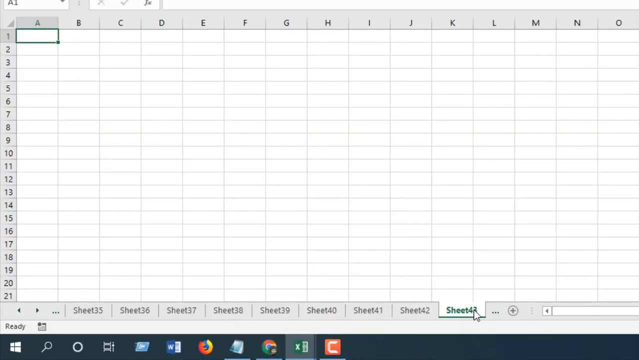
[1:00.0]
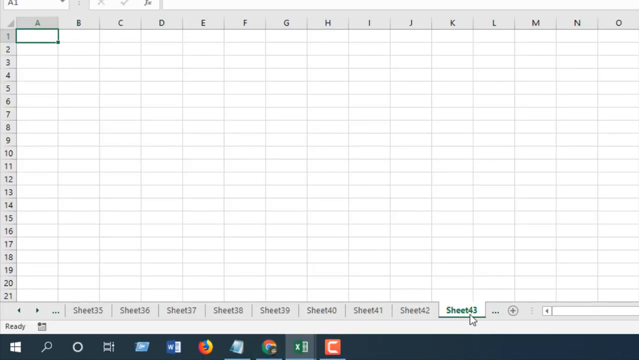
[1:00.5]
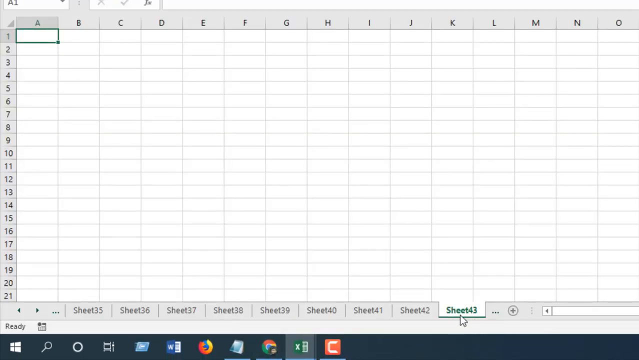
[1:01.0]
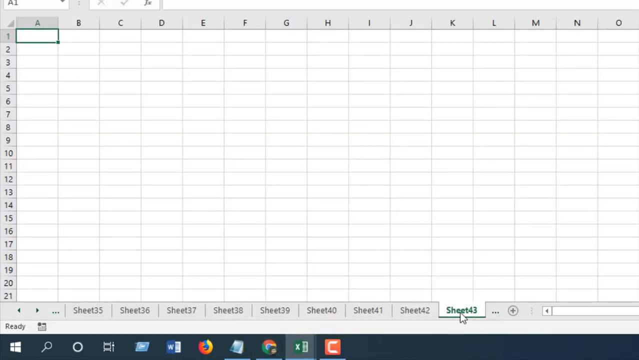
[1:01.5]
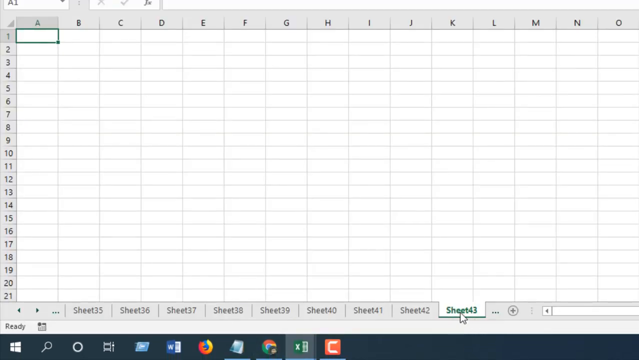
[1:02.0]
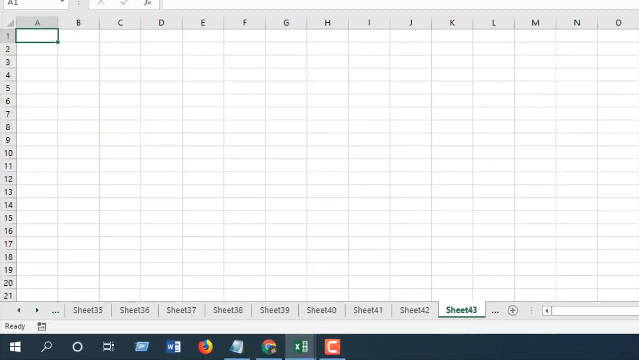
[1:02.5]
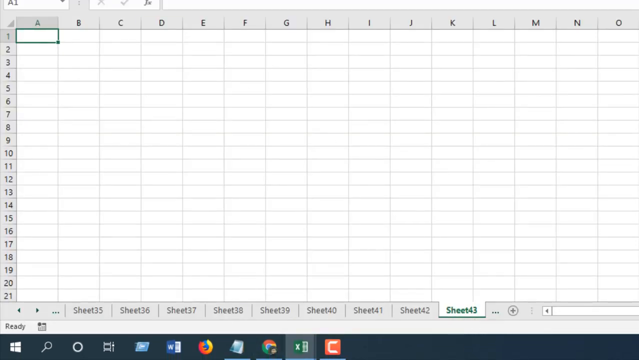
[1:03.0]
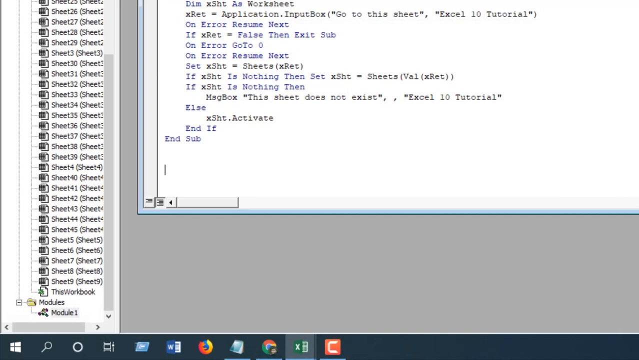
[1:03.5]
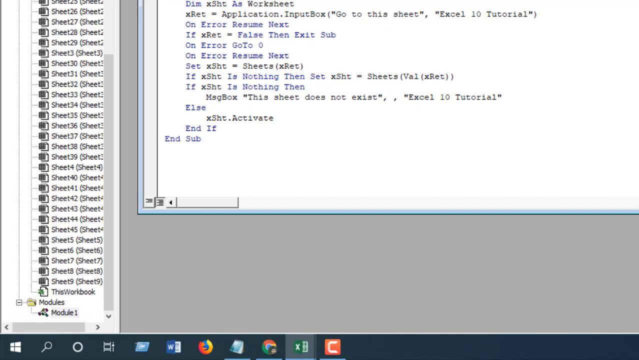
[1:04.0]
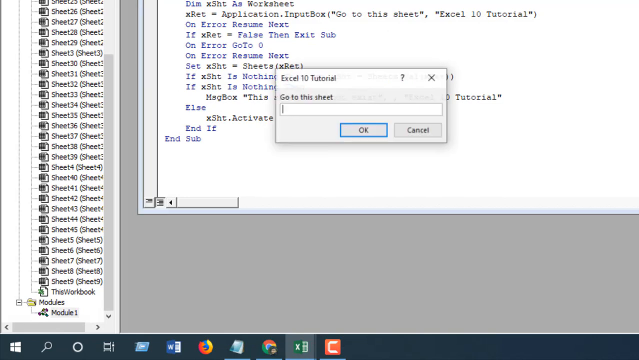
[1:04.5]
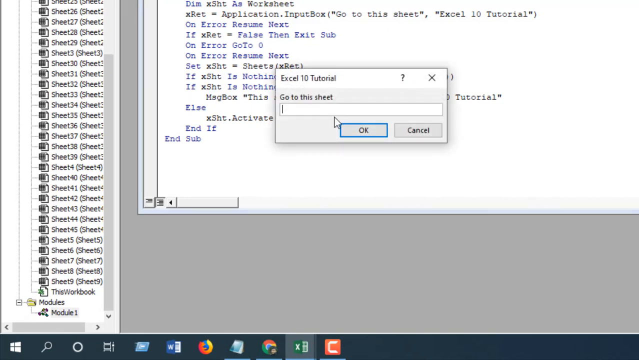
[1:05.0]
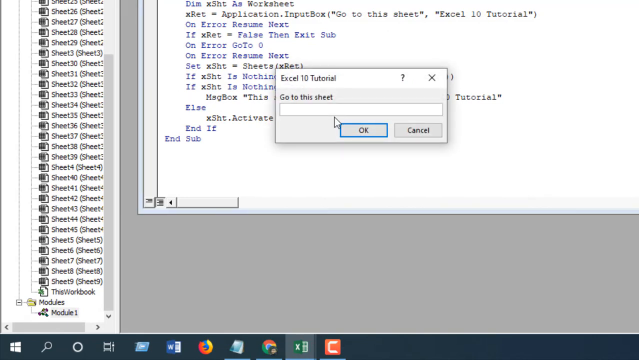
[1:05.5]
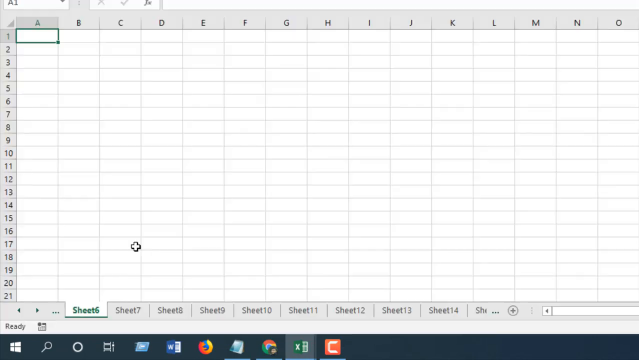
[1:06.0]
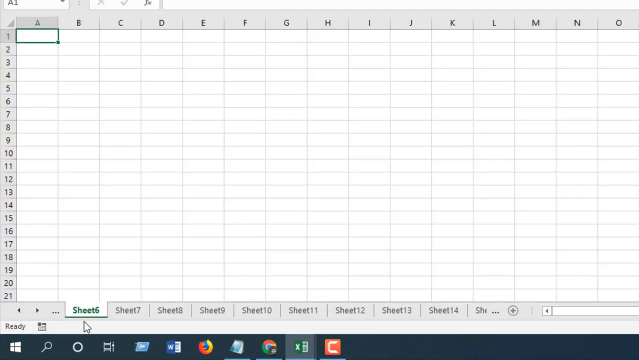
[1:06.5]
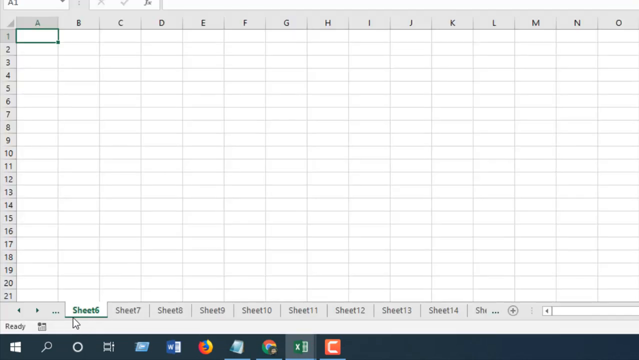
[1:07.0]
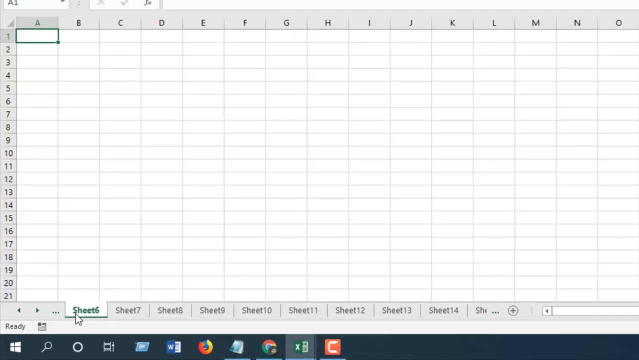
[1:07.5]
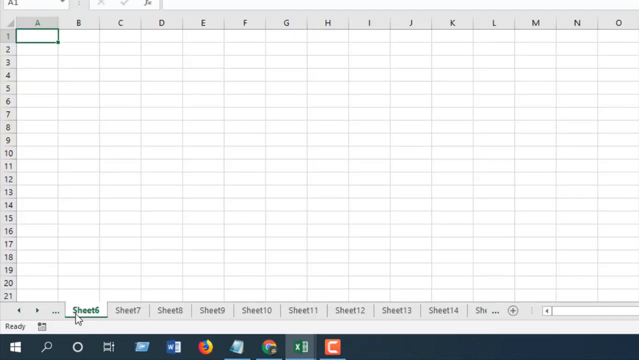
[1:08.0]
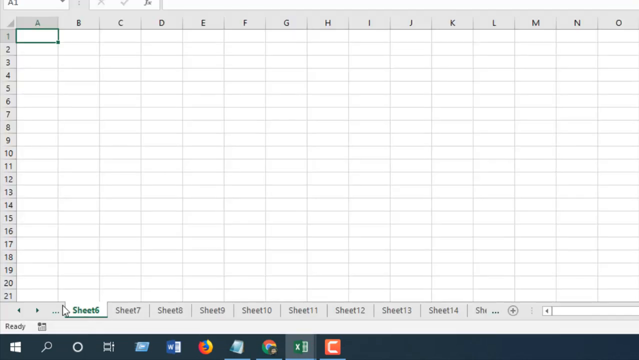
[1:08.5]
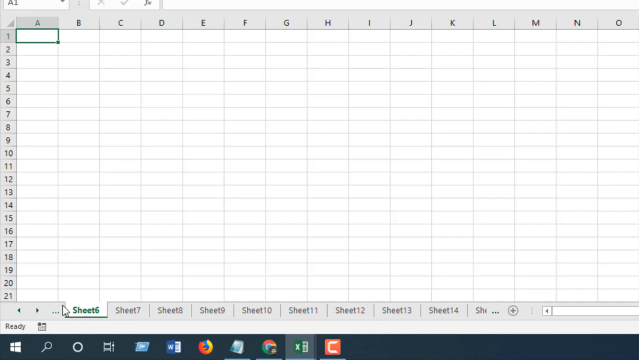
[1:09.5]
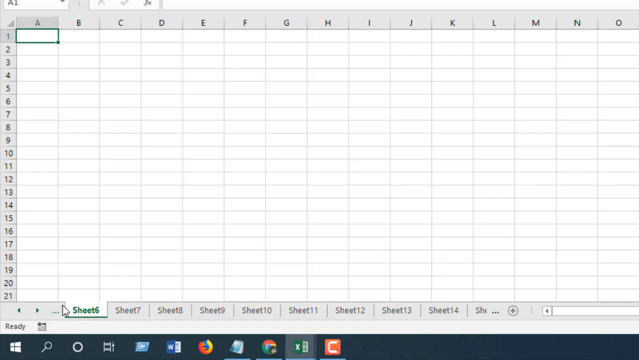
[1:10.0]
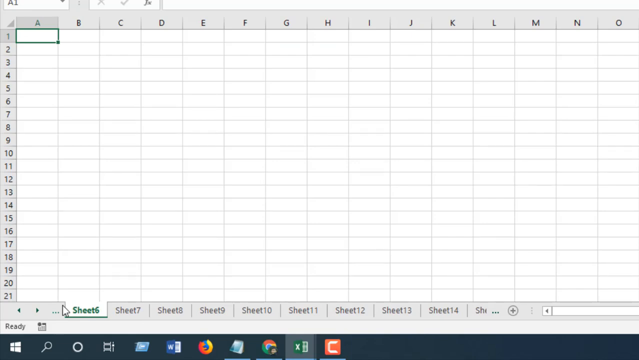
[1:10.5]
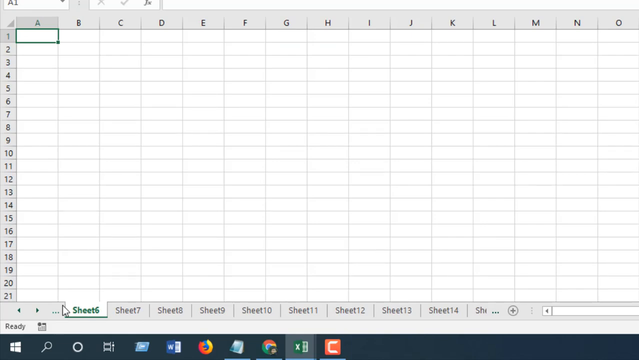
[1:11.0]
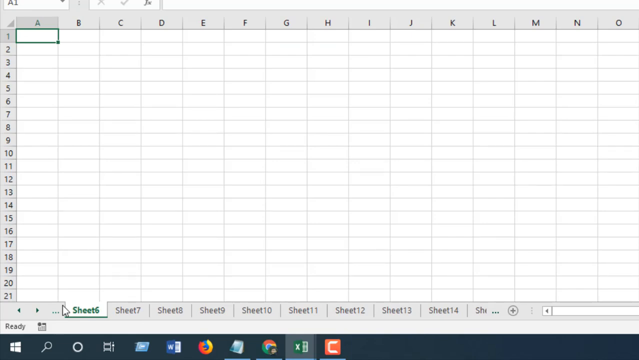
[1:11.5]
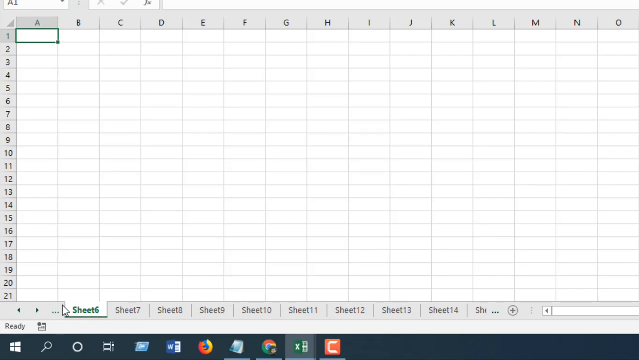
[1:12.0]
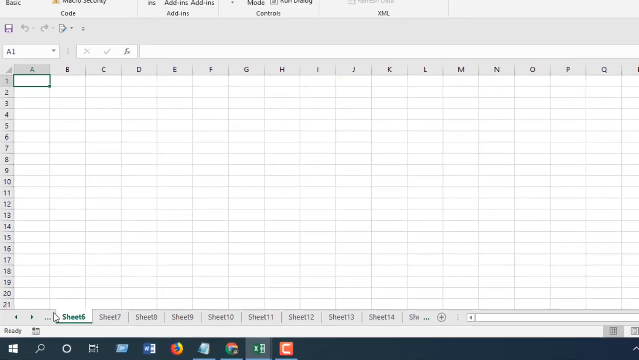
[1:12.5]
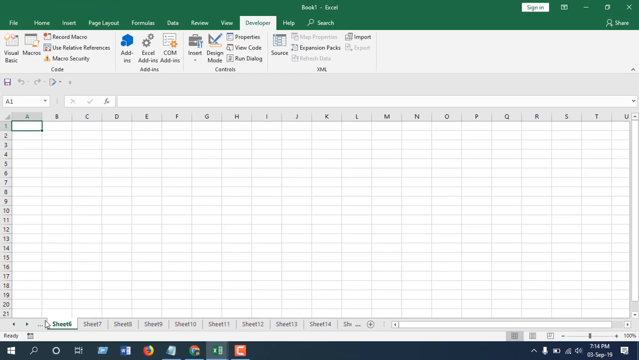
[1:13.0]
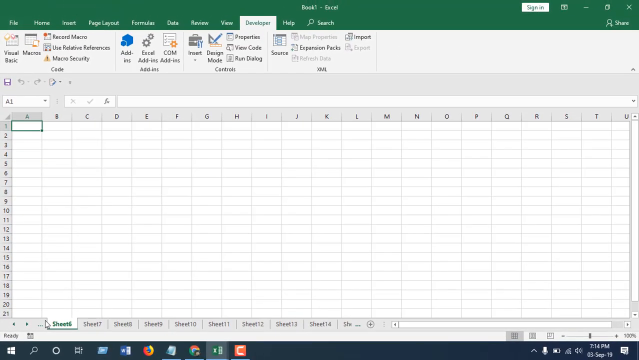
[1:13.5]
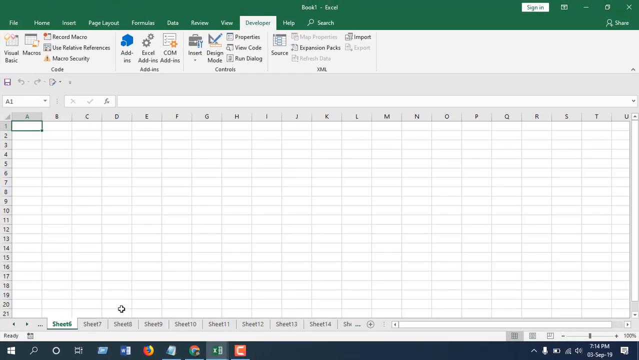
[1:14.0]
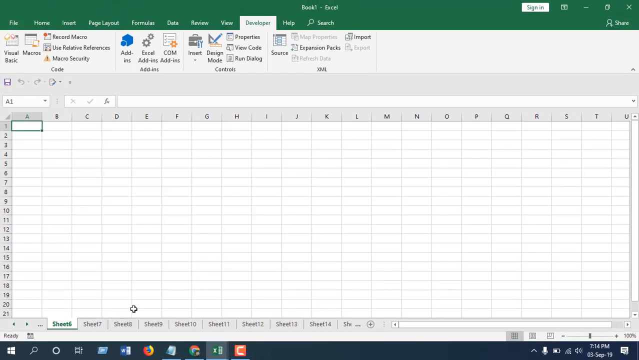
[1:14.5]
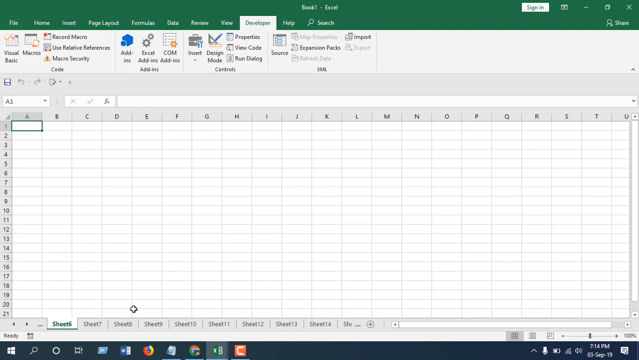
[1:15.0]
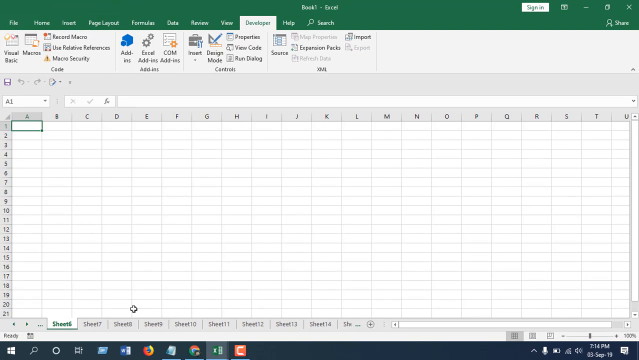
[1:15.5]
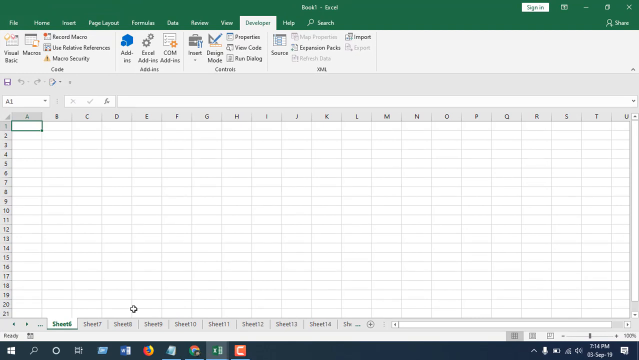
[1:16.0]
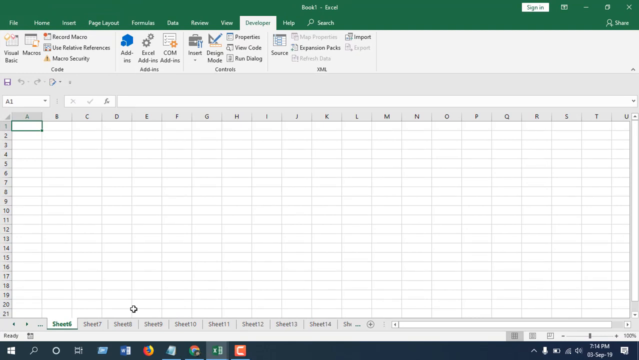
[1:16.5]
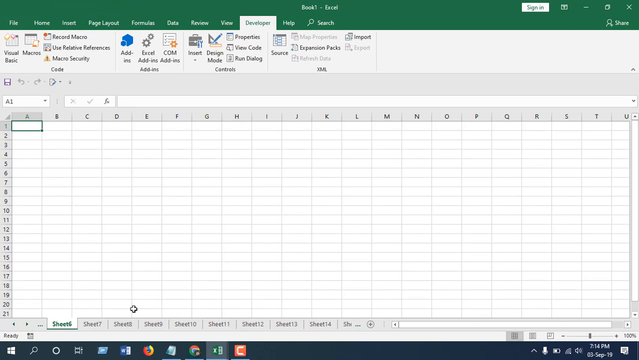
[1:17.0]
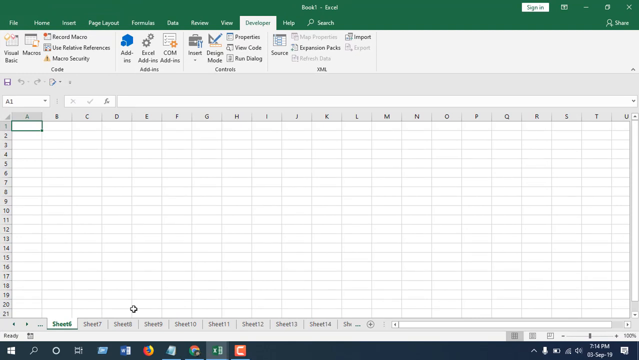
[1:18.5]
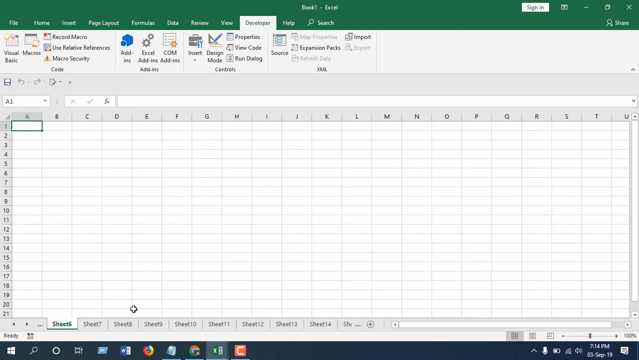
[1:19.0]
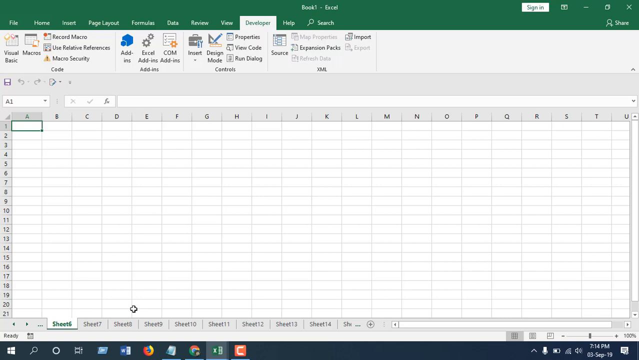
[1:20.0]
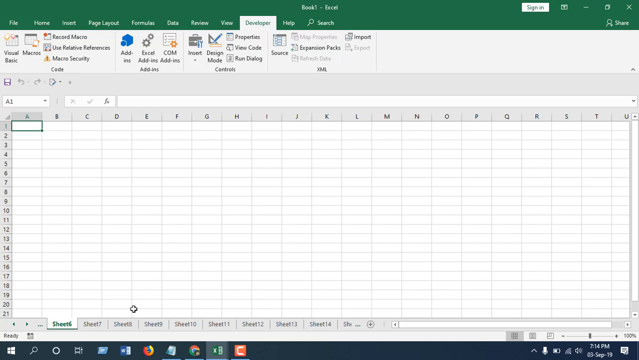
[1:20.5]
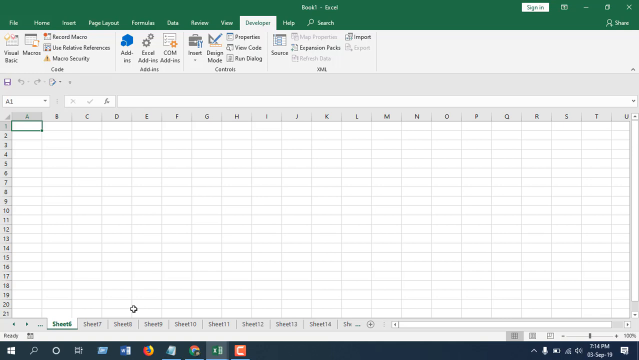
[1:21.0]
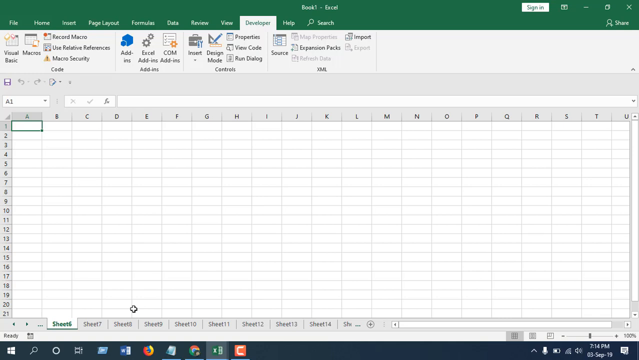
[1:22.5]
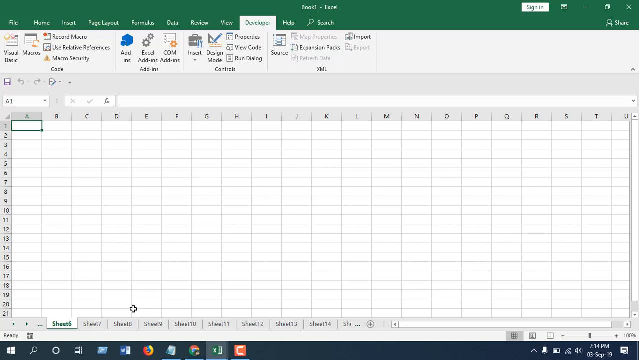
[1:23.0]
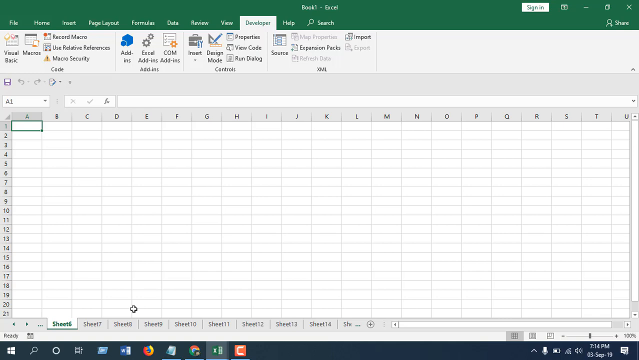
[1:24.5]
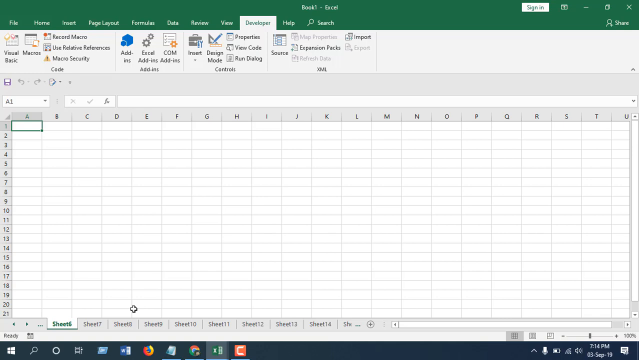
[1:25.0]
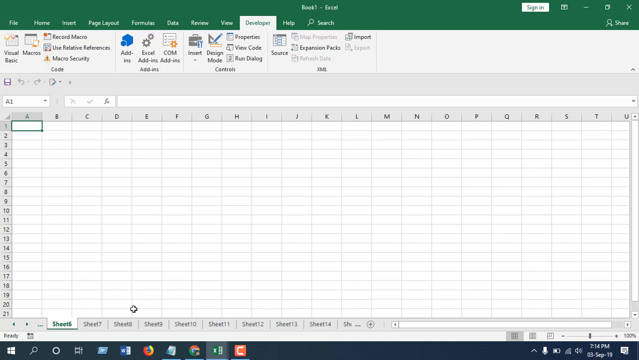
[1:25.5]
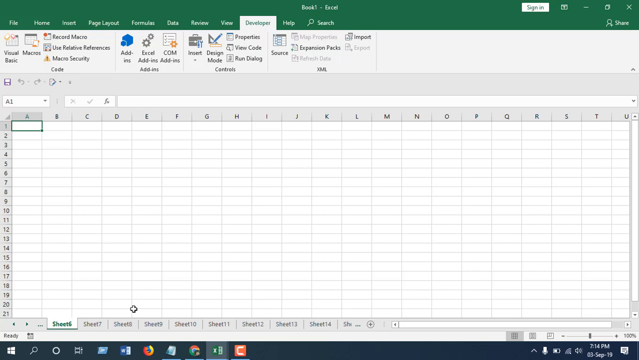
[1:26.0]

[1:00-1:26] What looks like a Microsoft Excel document with roughly 40 to 50 sheets is open. The user is on sheet 43 of Book 1, using a reference to a specific text. Later they go to sheet 6 of the same book, and then the view slowly zooms out to show the whole page of Book 1. After the information is input into the sheet, the Developer tab is shown with many tabs and buttons, including Visual Basic, Macros, Coding, Add-ons, Controls, XML, Insert, Design Mode, Add-ins, Macro Security and many others.